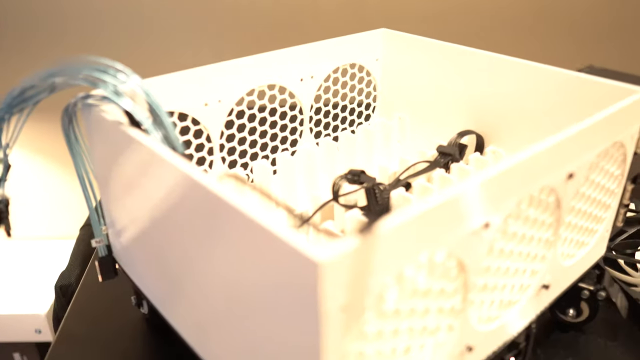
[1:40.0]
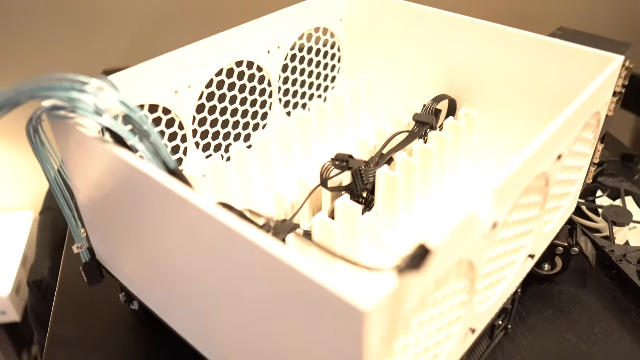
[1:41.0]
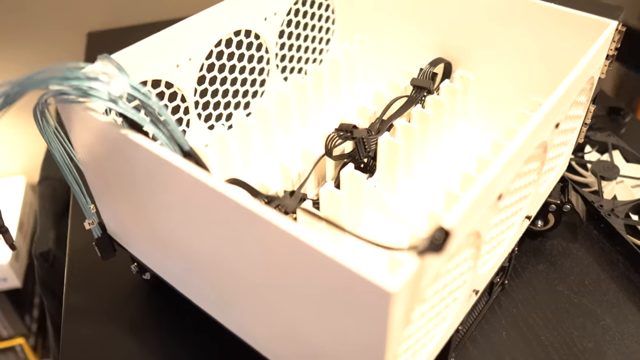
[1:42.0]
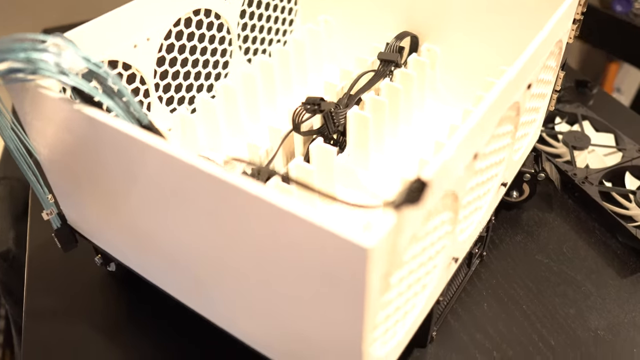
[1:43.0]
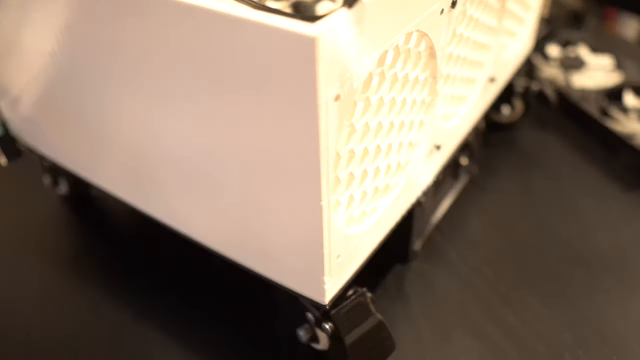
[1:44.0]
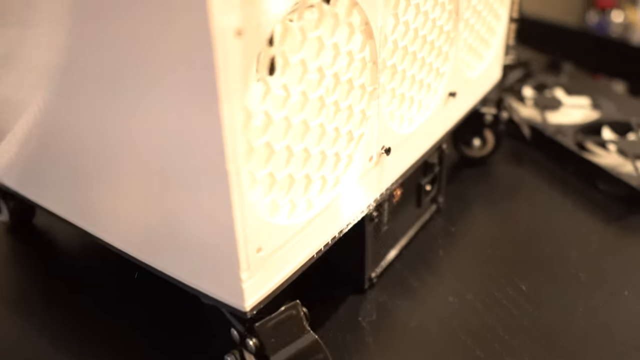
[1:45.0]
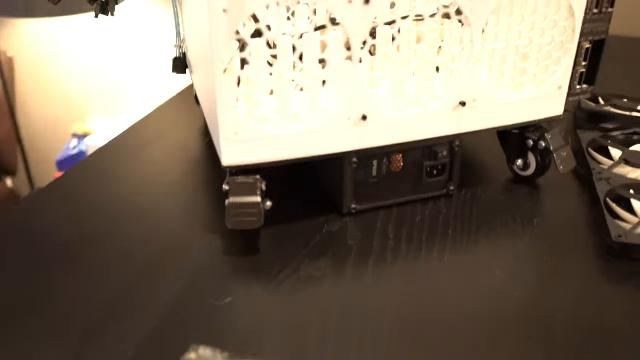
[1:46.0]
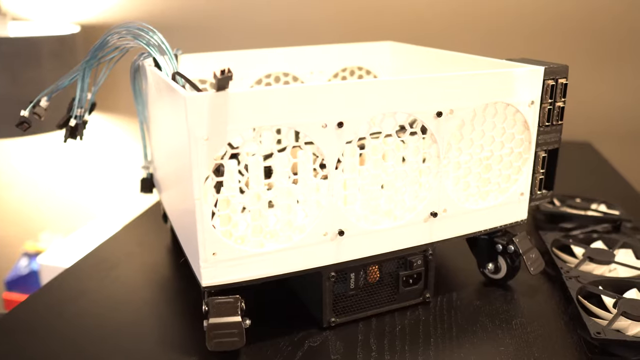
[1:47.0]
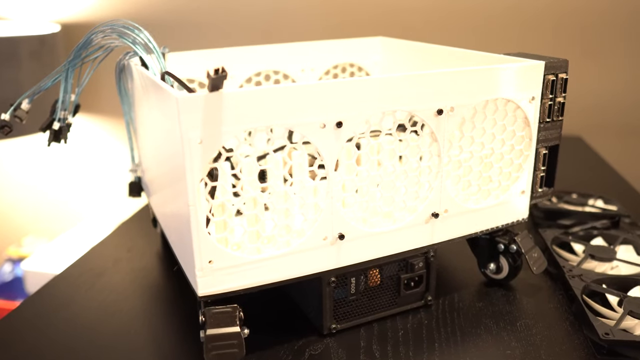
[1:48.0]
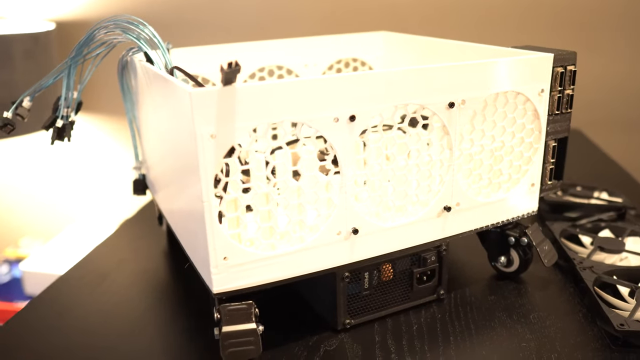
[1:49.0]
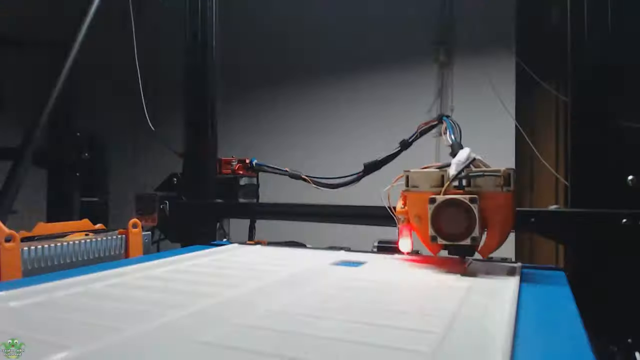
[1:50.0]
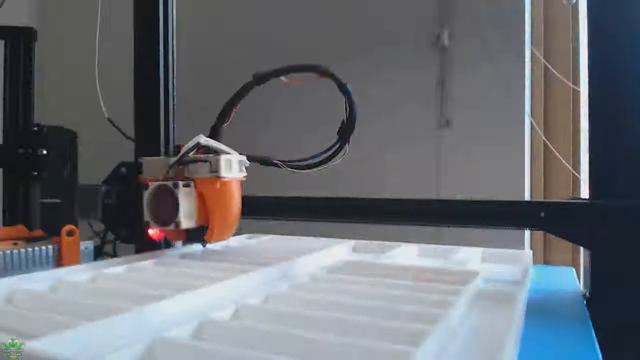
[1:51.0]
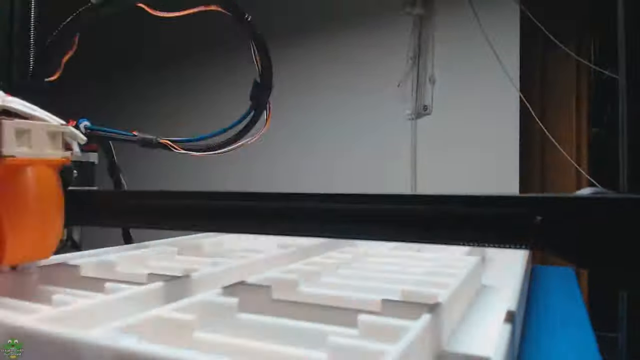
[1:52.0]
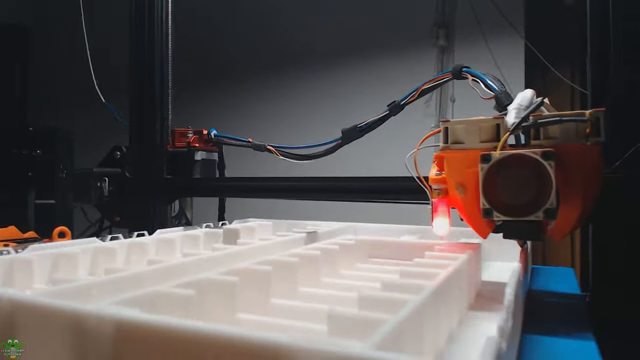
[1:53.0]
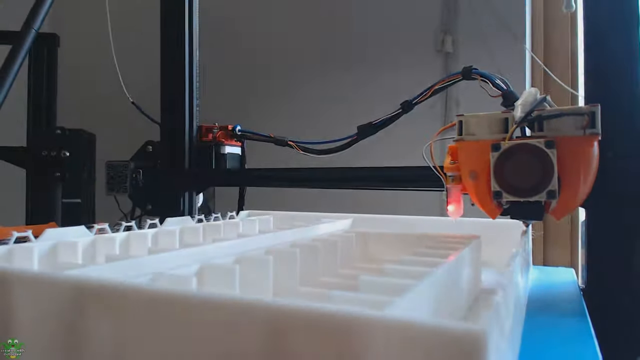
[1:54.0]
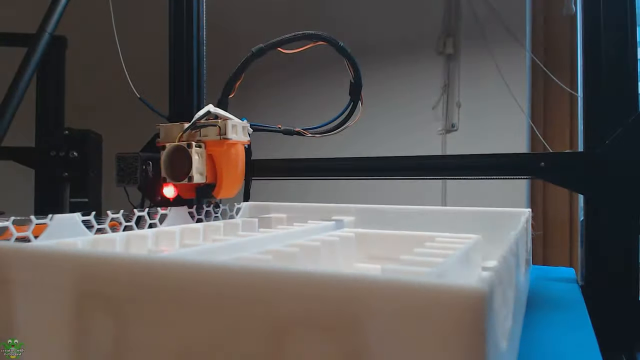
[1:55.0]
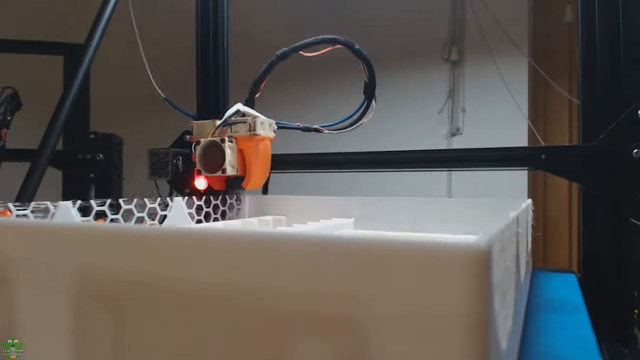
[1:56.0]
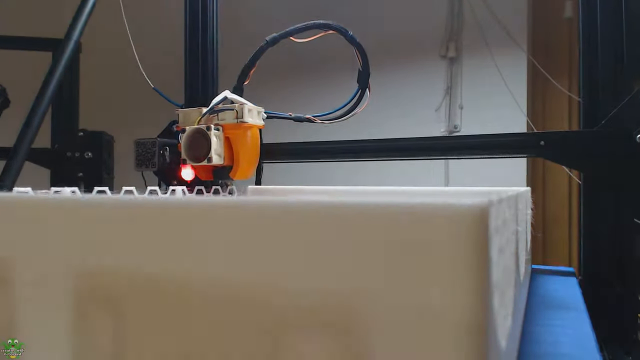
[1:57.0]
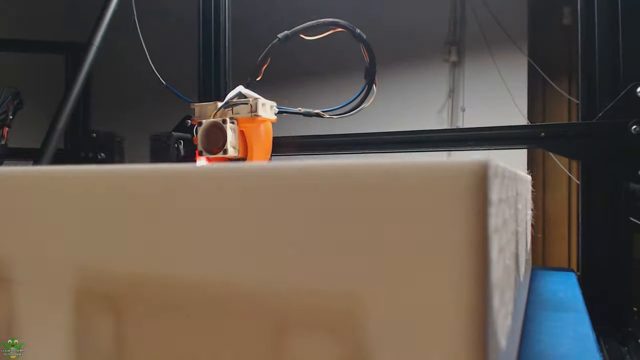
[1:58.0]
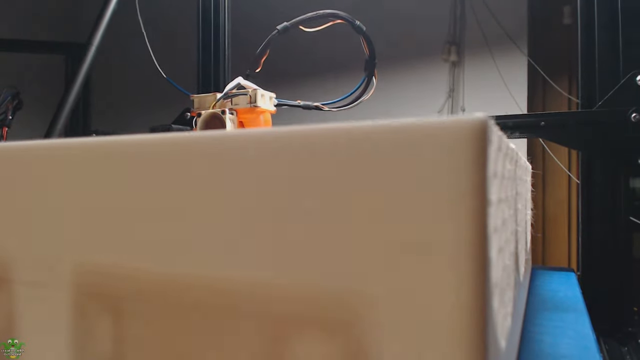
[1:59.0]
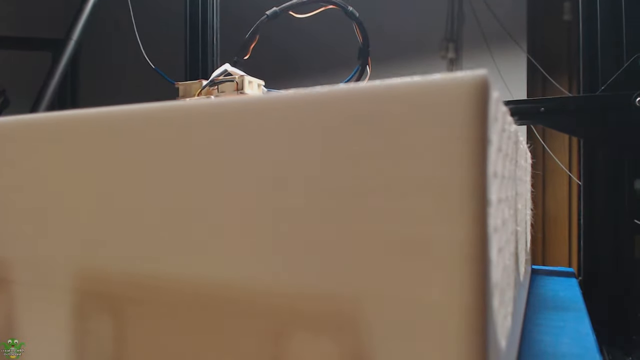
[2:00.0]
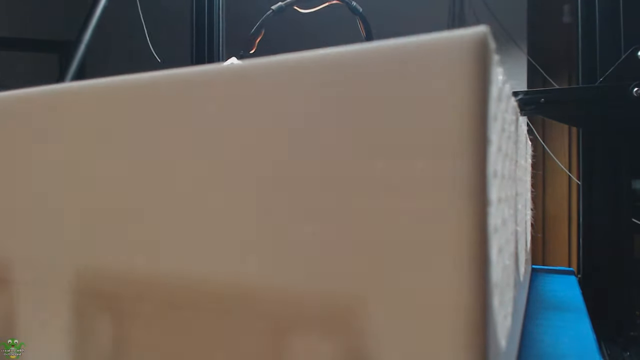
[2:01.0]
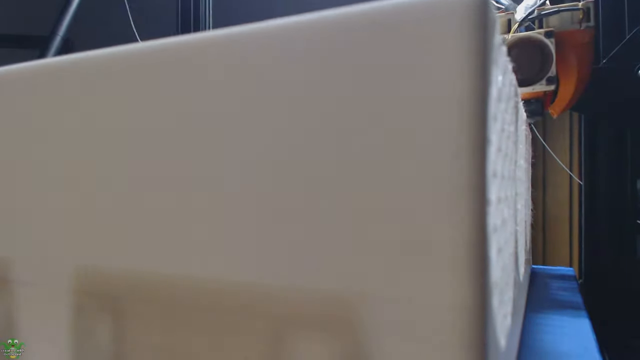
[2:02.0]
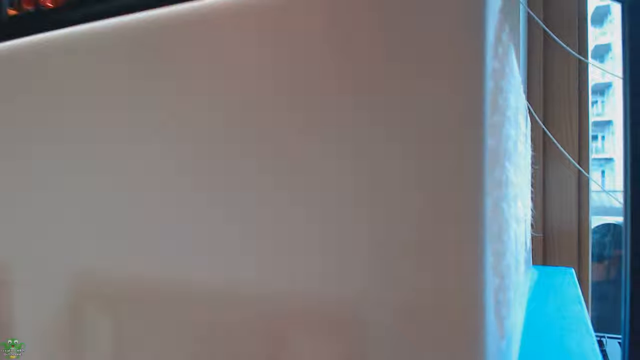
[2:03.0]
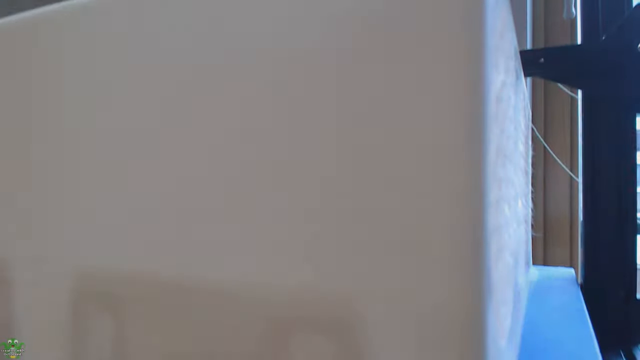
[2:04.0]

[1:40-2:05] A white, basket-like object appears, with some wires running across it, what seem to be screws in the side, and possibly ventilation holes in a honeycomb pattern. The box is on a table, and the camera hovers over it looking at the details, then pans down and around to the side and back, where the honeycomb pattern is next to a white piece of paper and some other equipment. The scene switches to an orange machine unit with a black cord that appears to be writing something on a table. At the bottom, the machine is shown to be a 3D printer building an item: it is orange, and black string is fed through it as it moves back and forth, creating the 3D object.